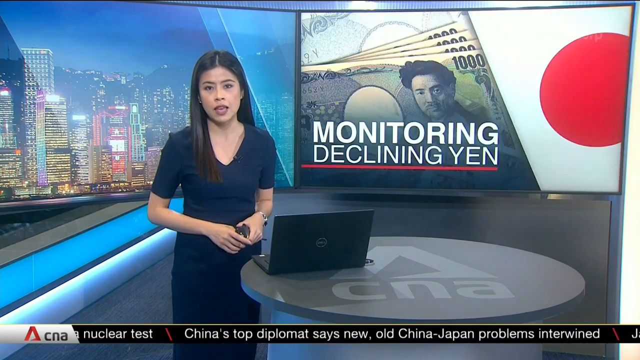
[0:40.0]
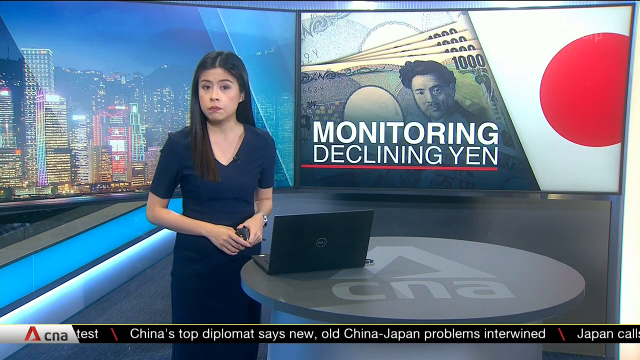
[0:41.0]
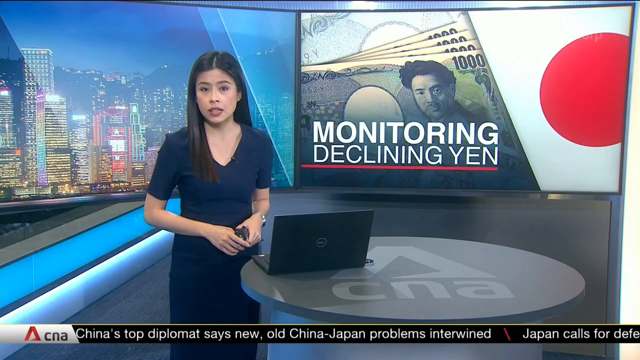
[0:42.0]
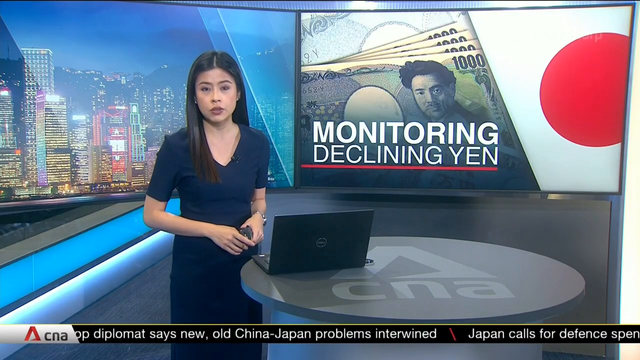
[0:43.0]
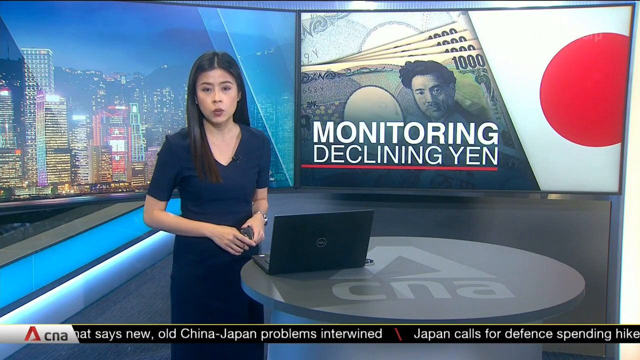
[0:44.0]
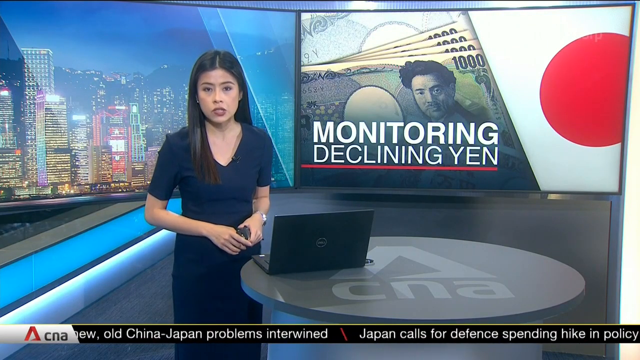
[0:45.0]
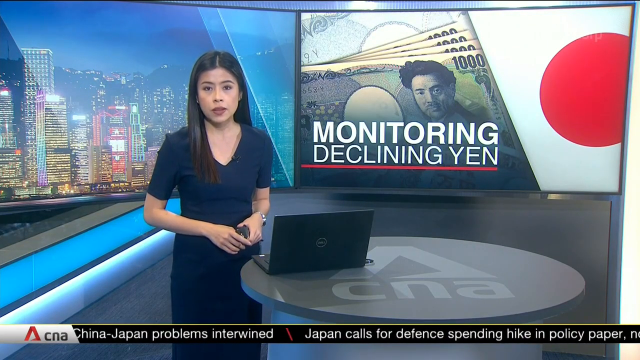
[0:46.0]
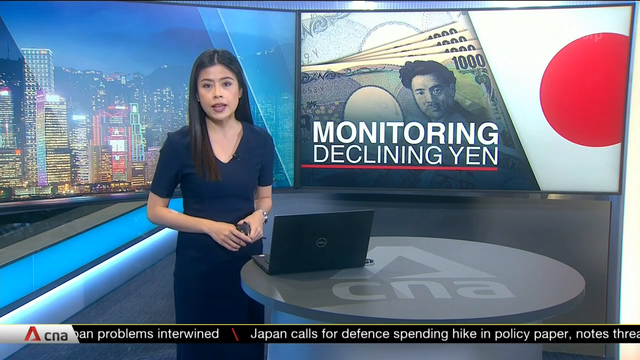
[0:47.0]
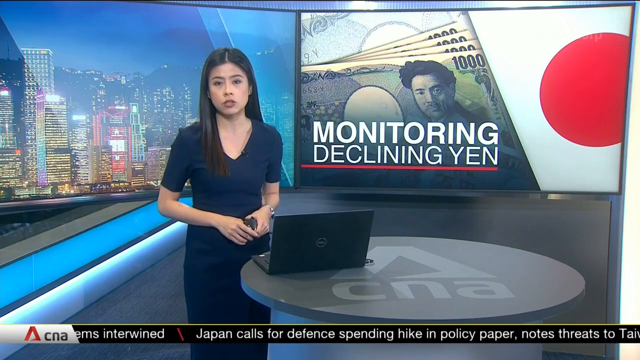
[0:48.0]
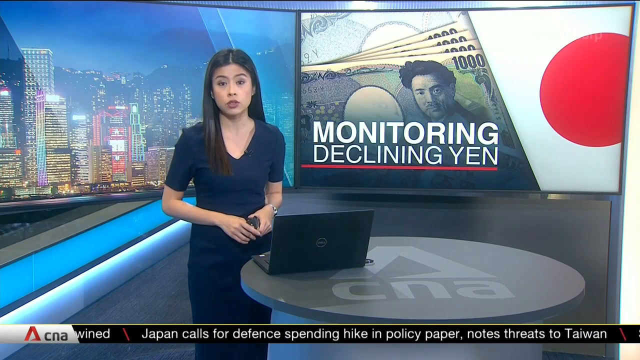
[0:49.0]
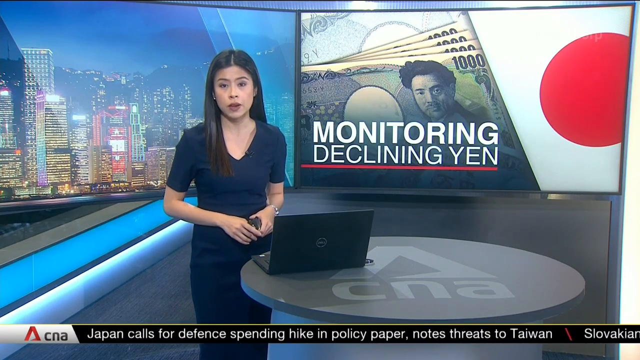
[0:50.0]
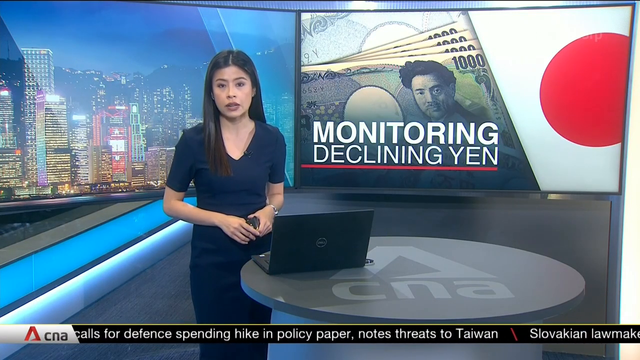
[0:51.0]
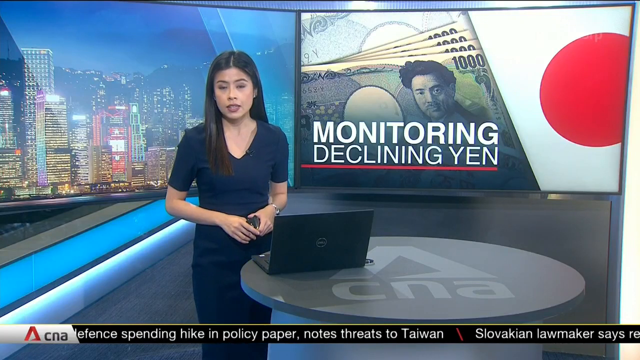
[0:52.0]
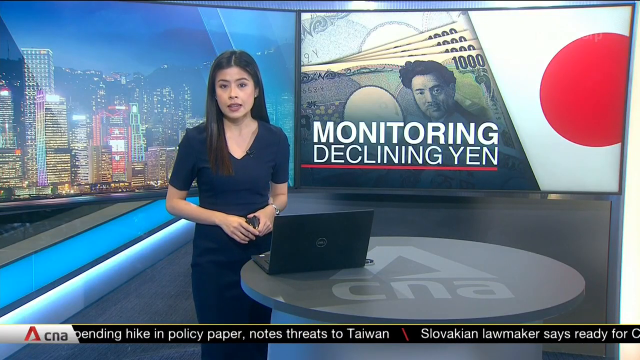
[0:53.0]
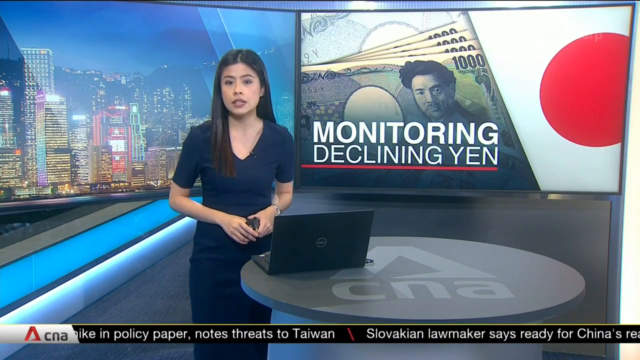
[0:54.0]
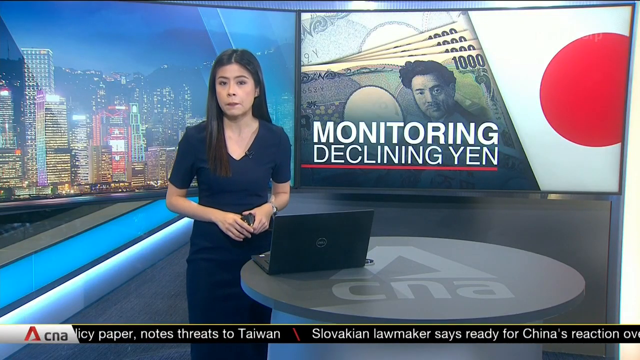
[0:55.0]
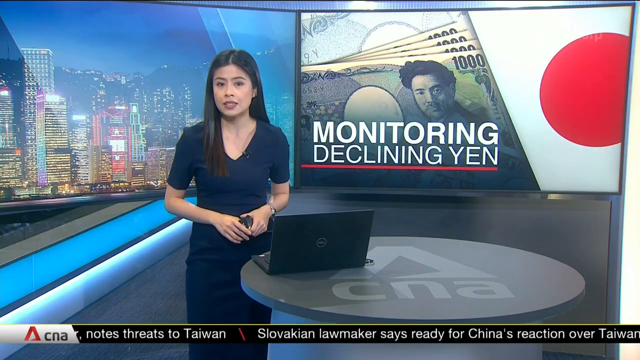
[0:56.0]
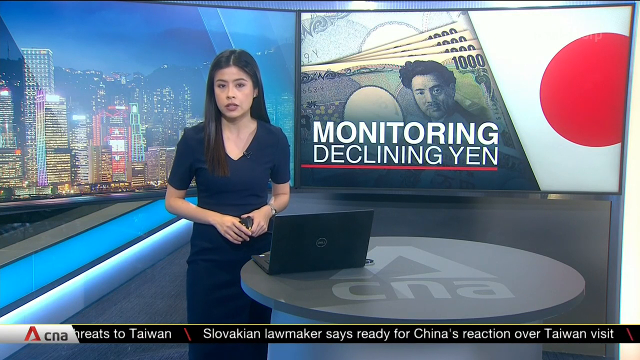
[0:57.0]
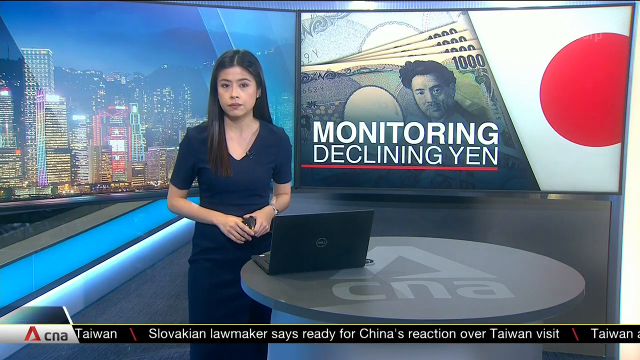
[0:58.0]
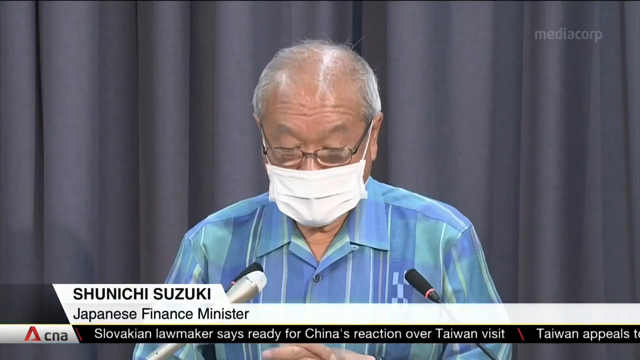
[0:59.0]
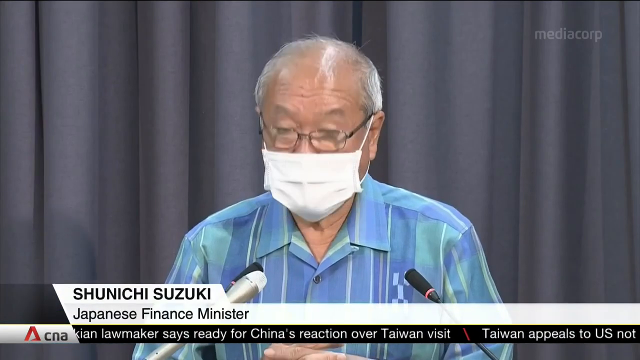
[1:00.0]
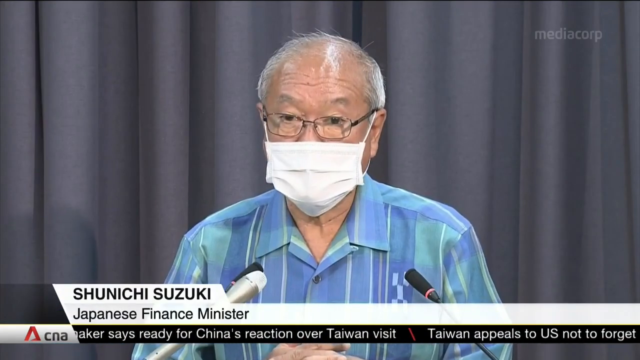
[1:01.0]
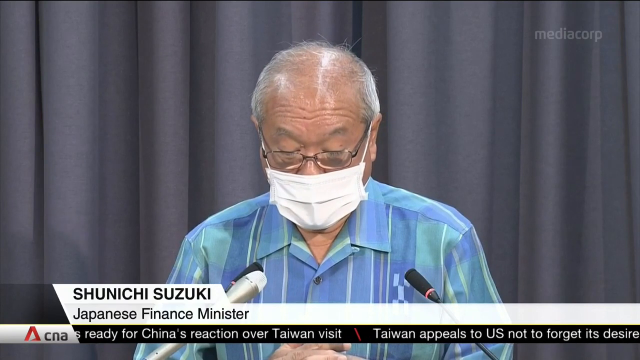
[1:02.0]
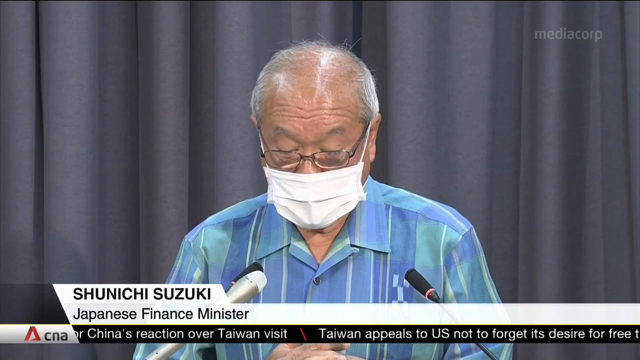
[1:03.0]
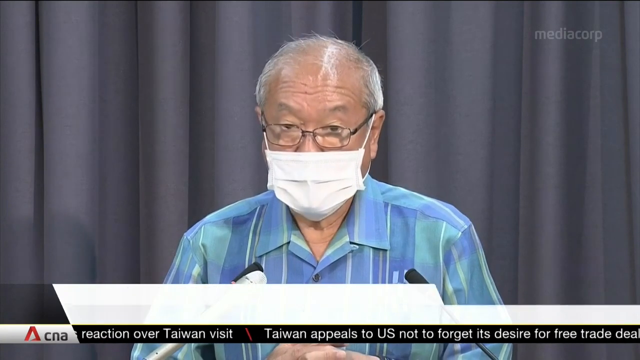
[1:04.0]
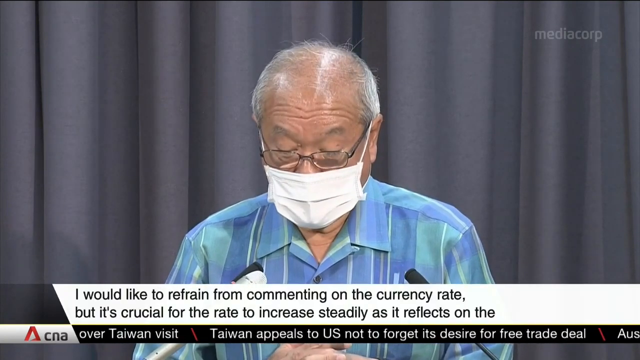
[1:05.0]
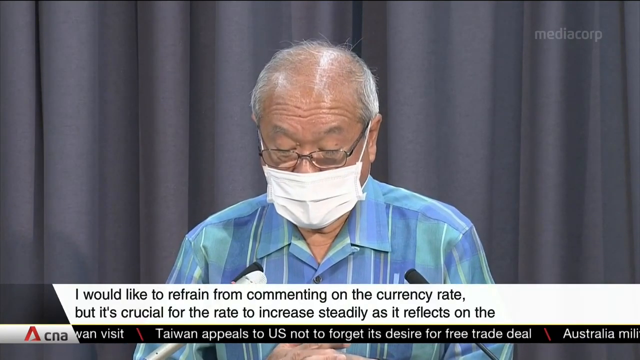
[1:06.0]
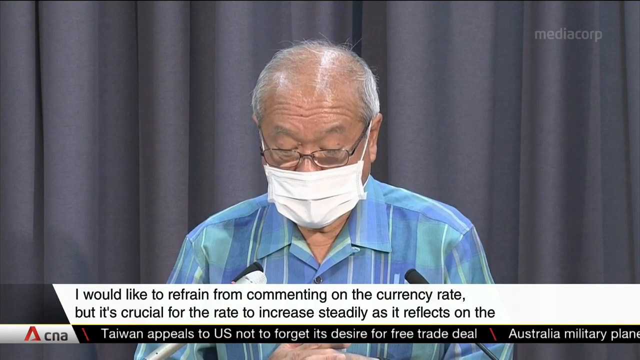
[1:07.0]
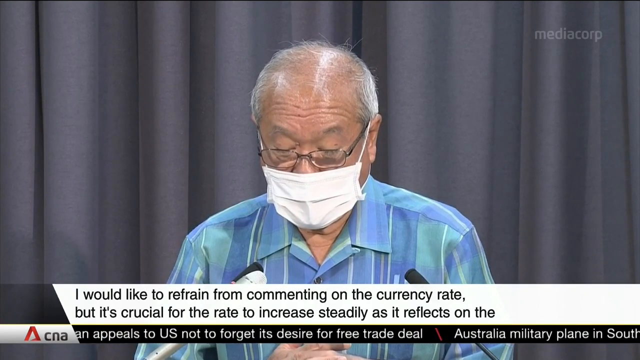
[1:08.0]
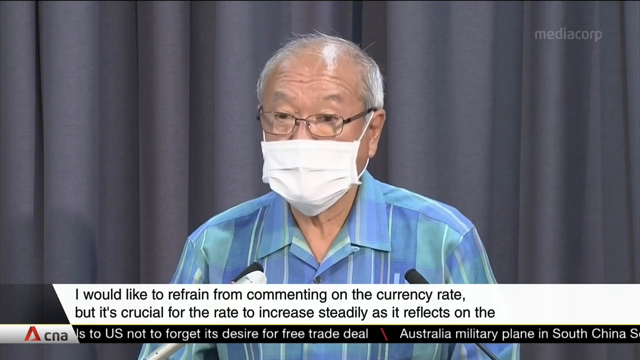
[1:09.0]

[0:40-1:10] Text reads "Japan calls for defense spending hike in policy paper," mentioning Taiwan, followed by "lawmaker says ready for China's reaction over Taiwan visit." The Japanese finance minister appears, with the caption "I would like to refrain from commenting on the currency rate, but it's crucial for the rate to increase steadily as it reflects on the," where the text cuts off. He wears a white mask on his face as he talks, silvery glasses, and a shirt in different shades of blue and very light green, with some parts striped. In the upper right-hand corner, text reads "Mediacorp."